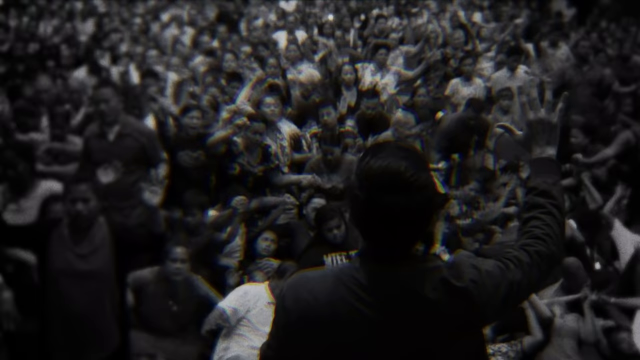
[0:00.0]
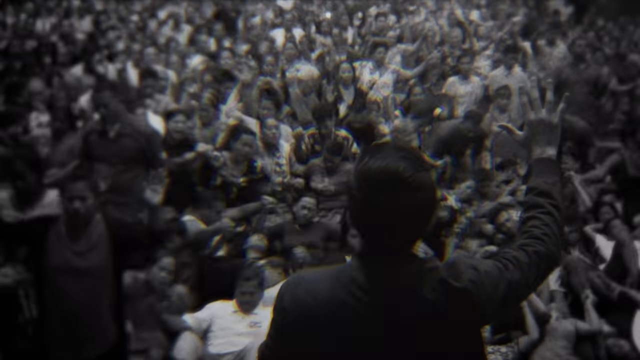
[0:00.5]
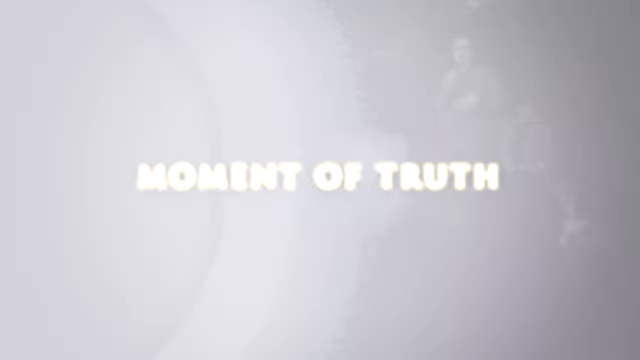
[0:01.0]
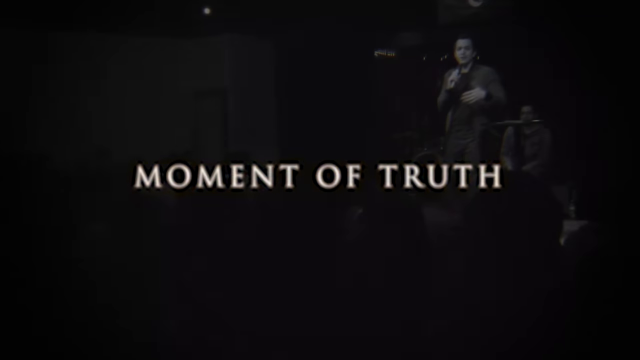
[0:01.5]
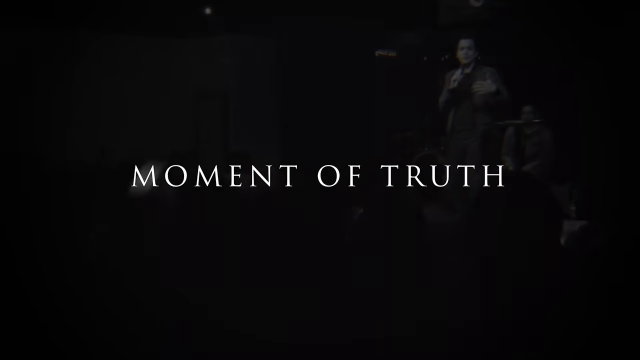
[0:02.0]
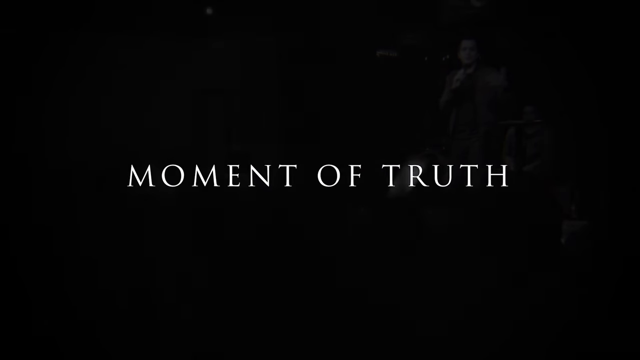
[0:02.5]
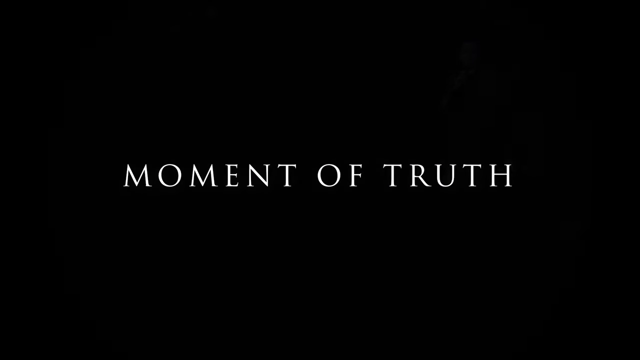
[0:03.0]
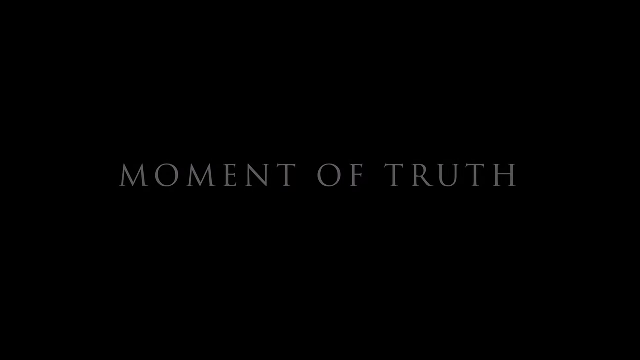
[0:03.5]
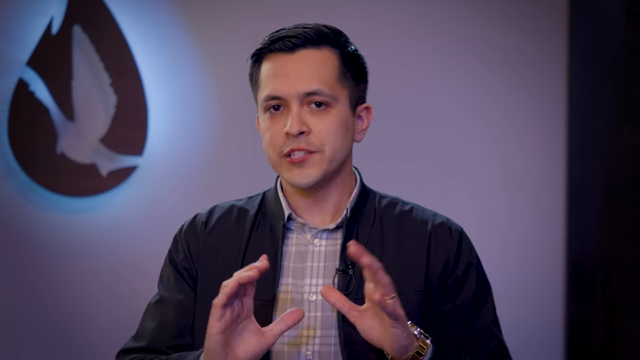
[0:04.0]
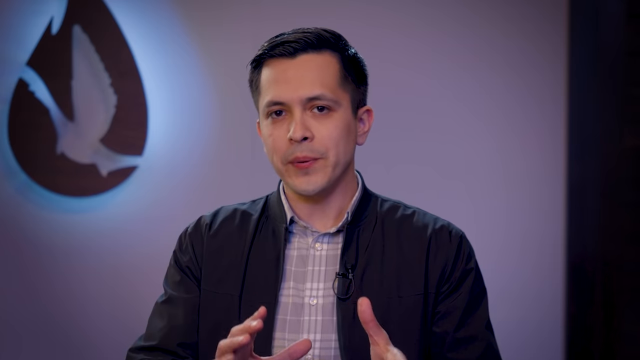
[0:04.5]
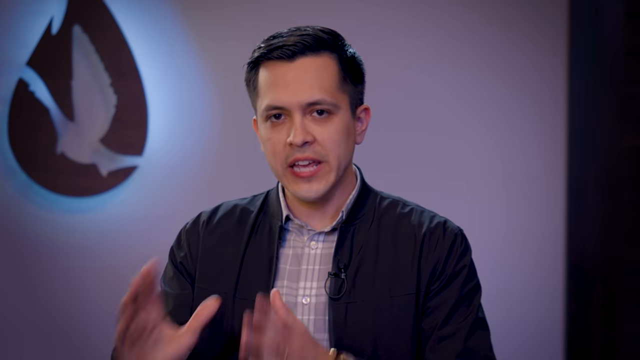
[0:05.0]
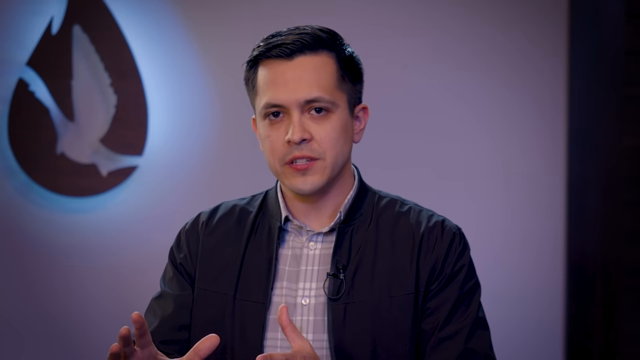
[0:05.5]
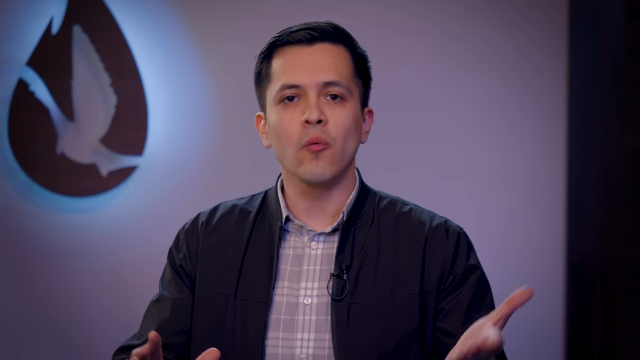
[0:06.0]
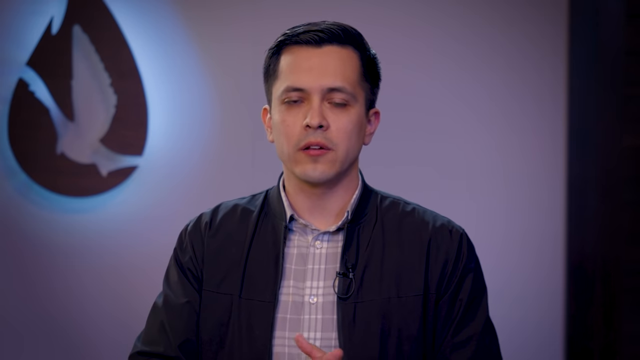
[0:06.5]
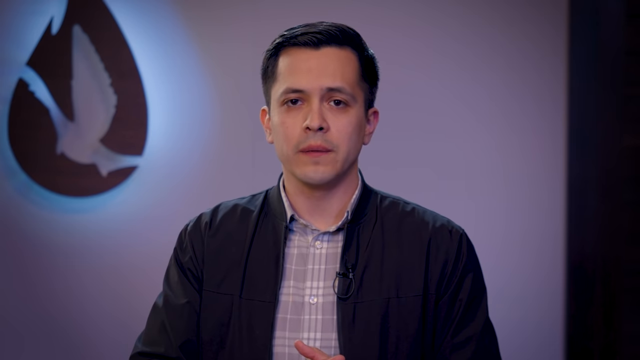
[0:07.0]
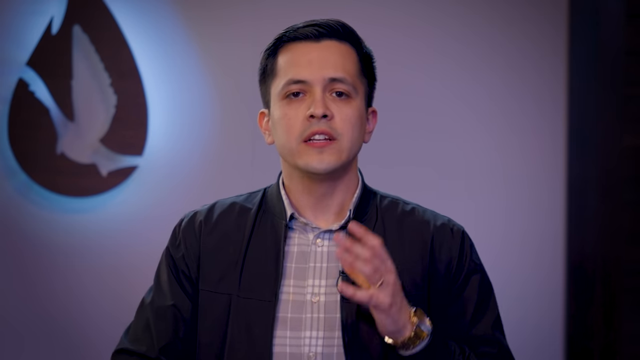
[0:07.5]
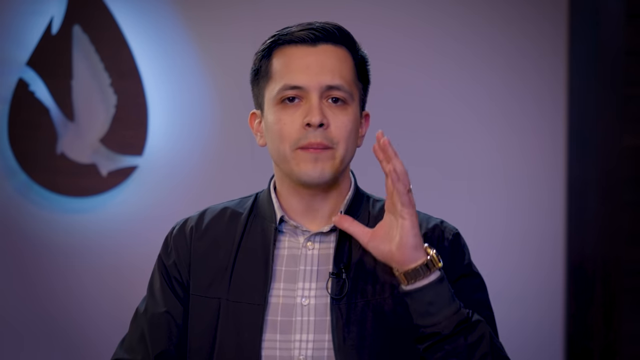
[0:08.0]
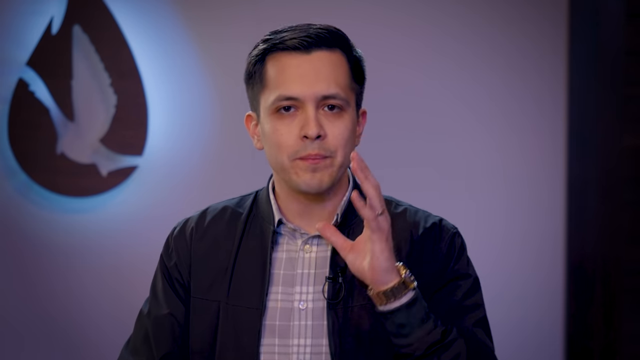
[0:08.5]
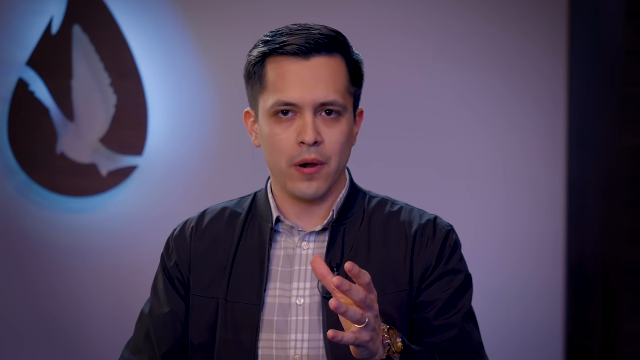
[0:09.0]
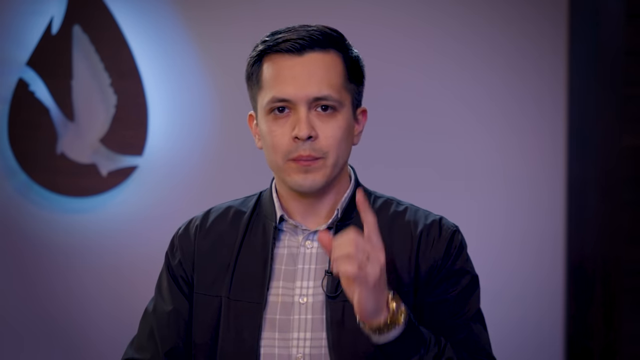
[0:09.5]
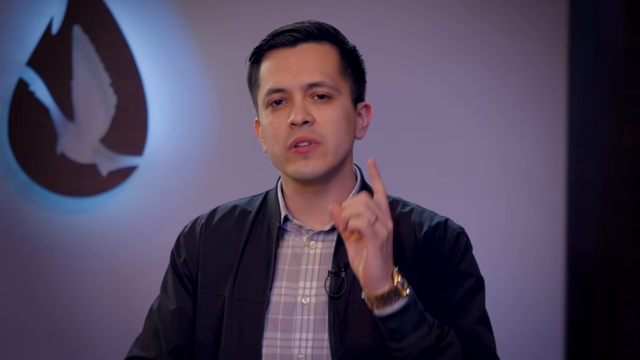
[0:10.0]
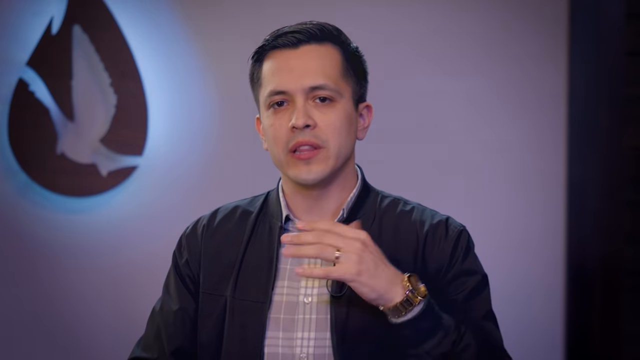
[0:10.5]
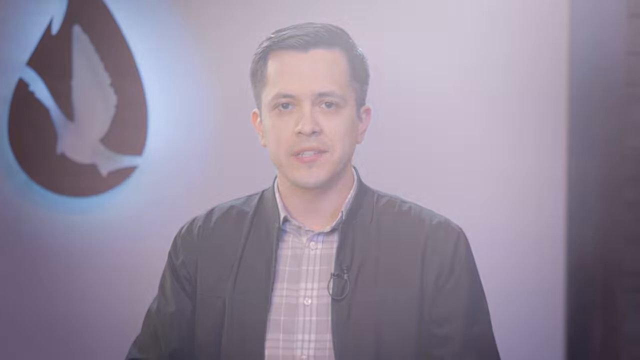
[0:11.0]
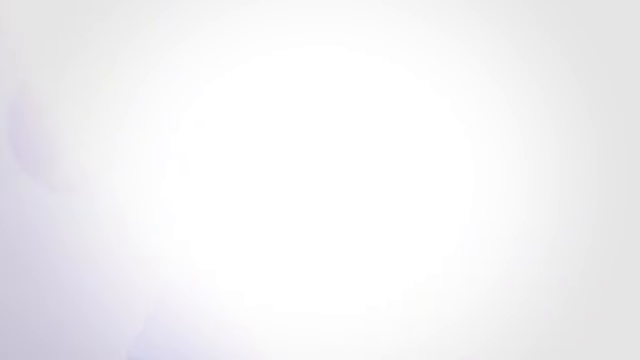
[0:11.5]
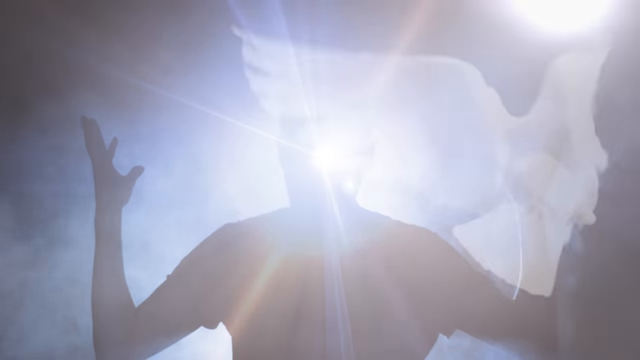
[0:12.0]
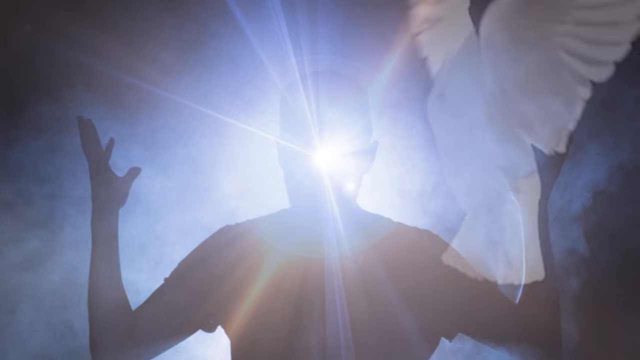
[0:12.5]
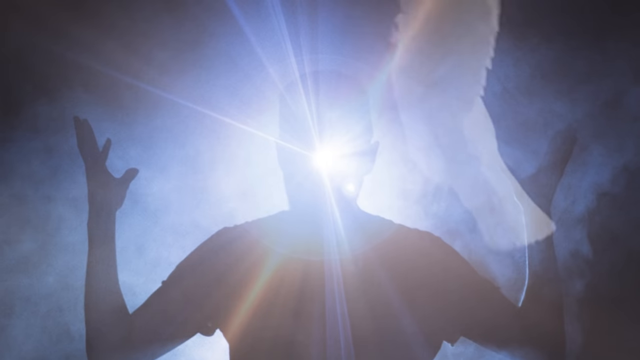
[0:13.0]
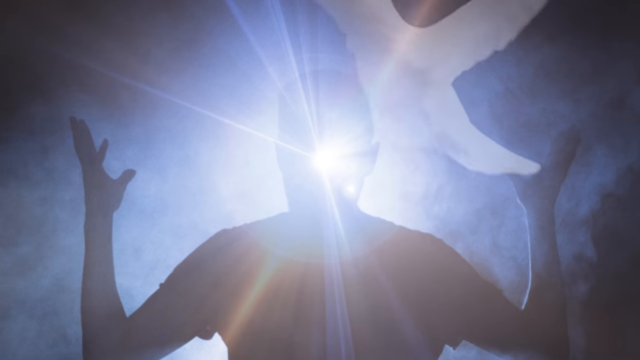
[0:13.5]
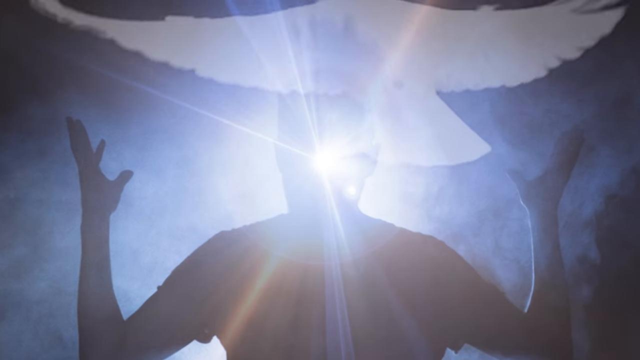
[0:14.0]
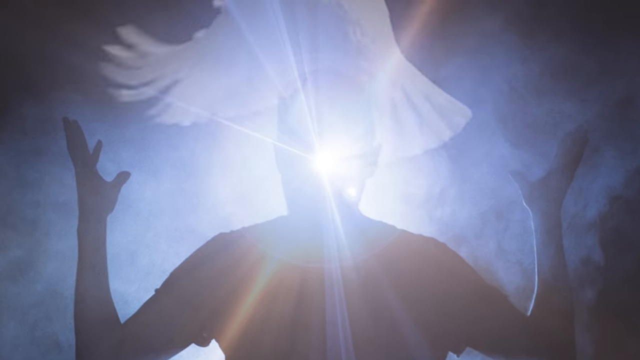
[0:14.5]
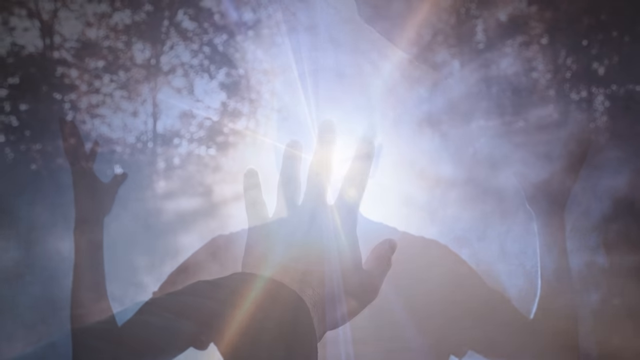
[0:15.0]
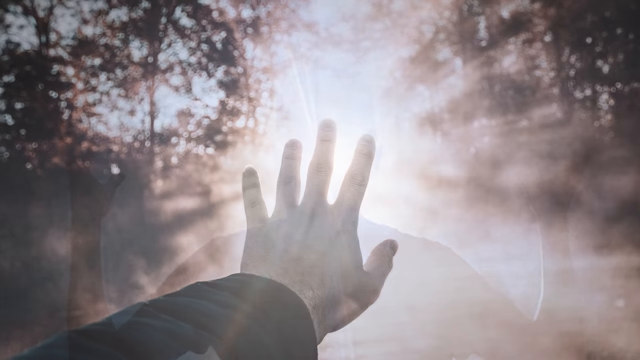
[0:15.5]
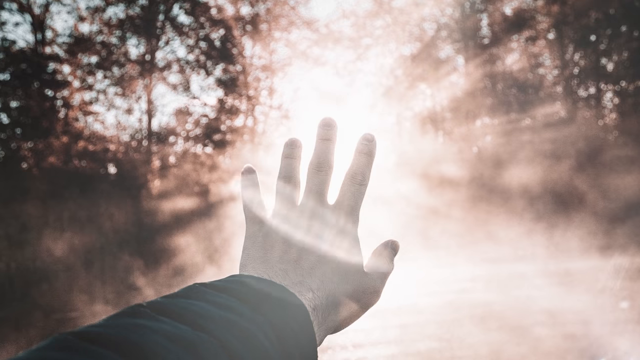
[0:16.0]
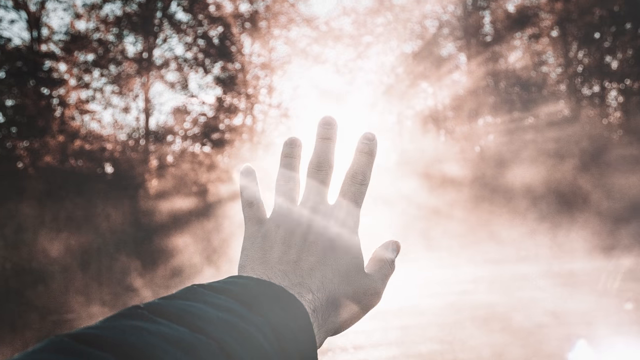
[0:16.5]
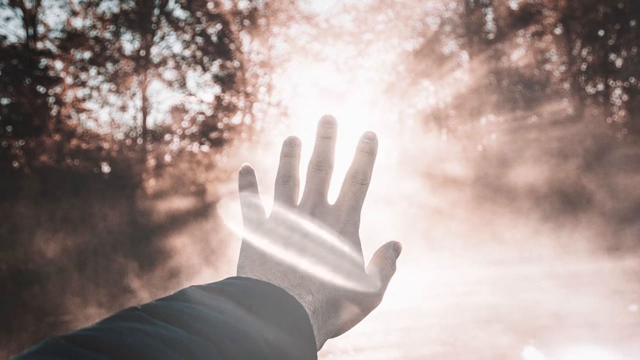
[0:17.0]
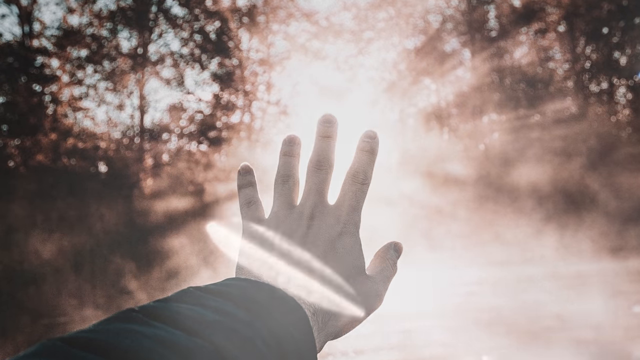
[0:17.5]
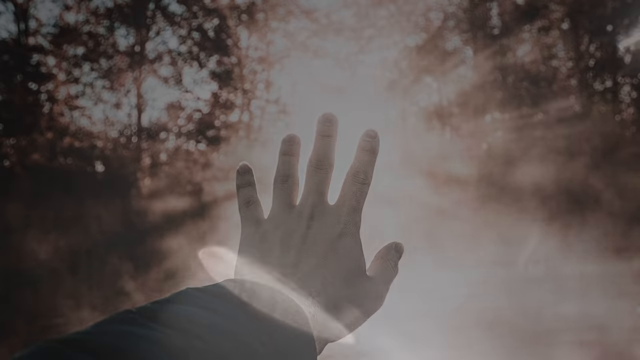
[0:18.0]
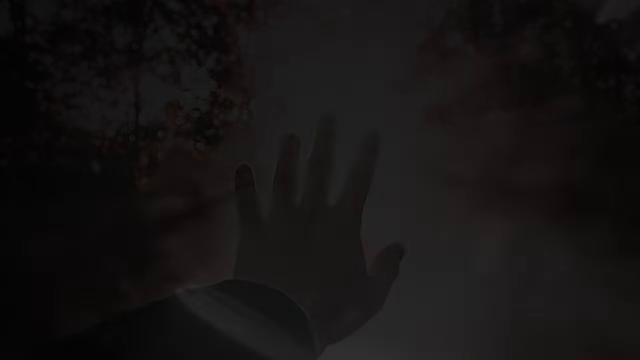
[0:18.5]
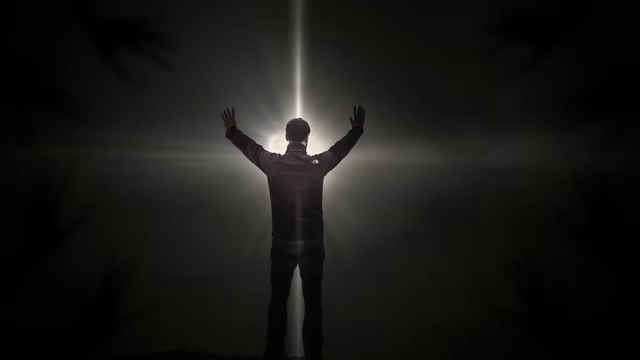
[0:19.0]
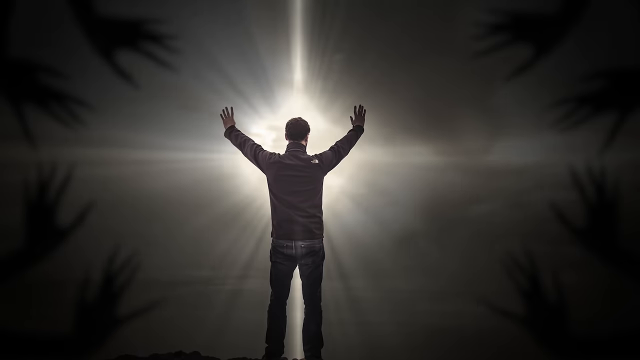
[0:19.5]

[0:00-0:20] A black screen shows white writing exactly in the center. A man is then framed, gesticulating with his left hand; he wears a dark-colored jacket and a light-colored square shirt. Behind him is a white wall, and on the left side of the screen on the wall there is an irregular, dark-colored logo. After a white light bulb, a man whose face is not clearly visible appears in the center of the screen for a few moments with both arms raised, while the silhouette of a white dove moves in the upper part of the frame. Next, a hand appears stretched forward against a forest background. A man then stands in the center of the frame with both hands raised and turned up, and for a few moments dark silhouettes of hands surrounding him are visible at the left and right ends of the image. Behind the man is a light source placed exactly in the center of the frame, while the background all around is black.